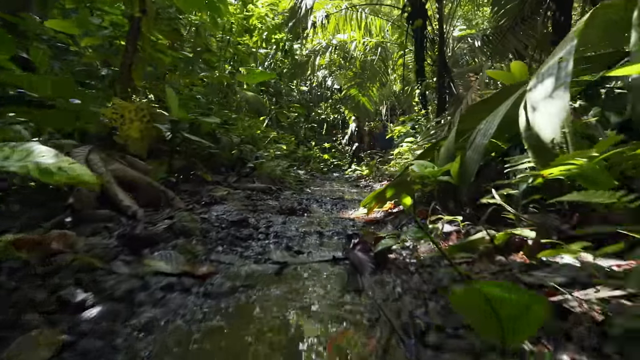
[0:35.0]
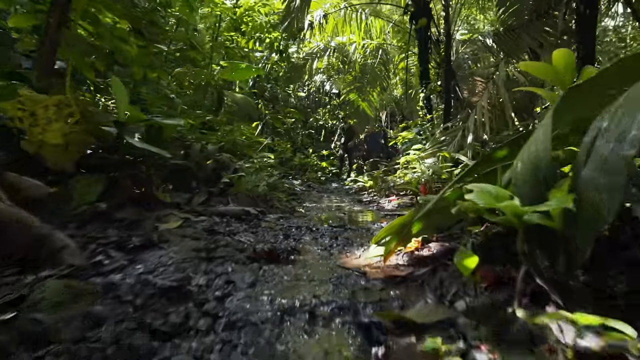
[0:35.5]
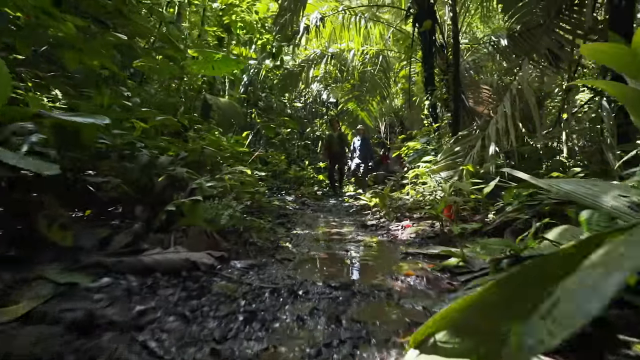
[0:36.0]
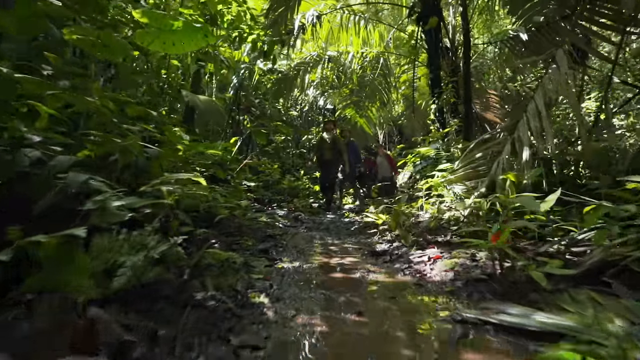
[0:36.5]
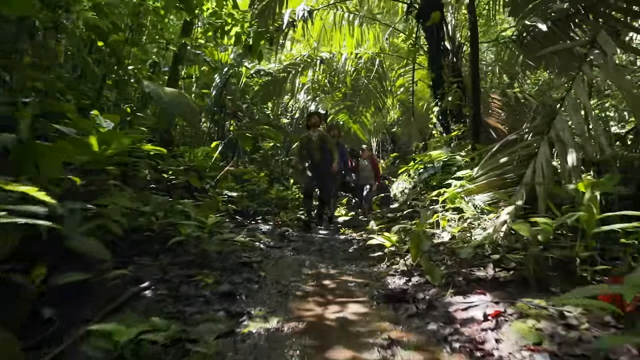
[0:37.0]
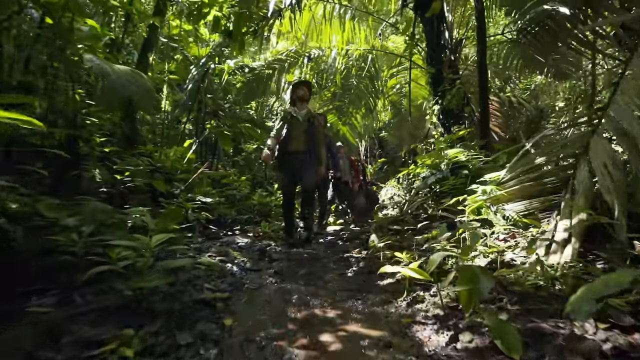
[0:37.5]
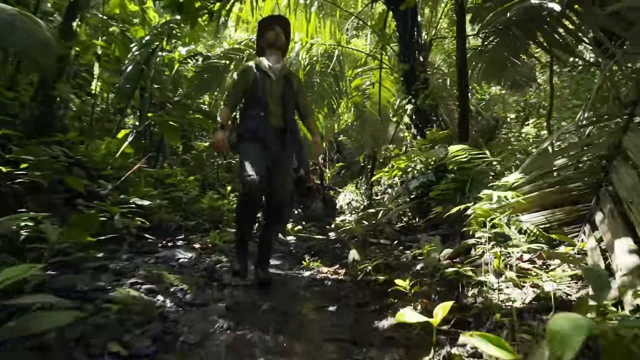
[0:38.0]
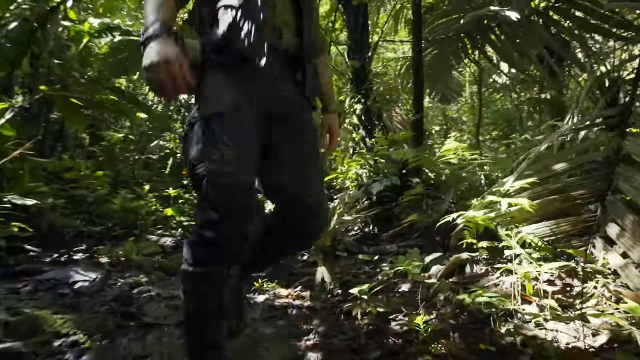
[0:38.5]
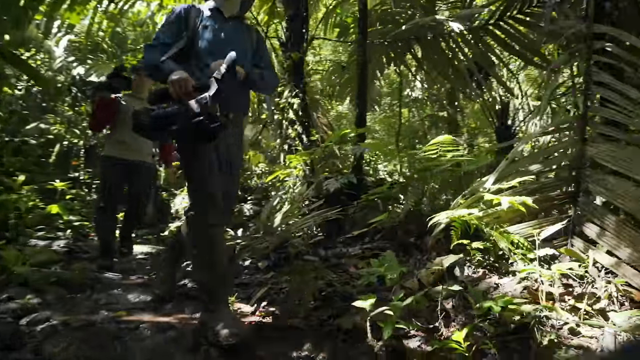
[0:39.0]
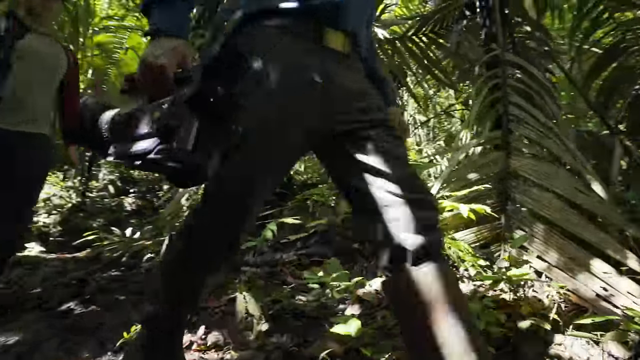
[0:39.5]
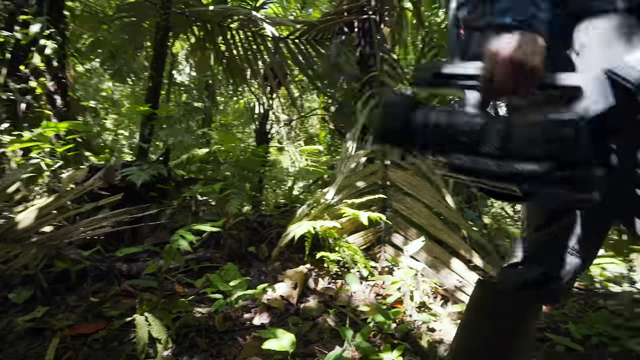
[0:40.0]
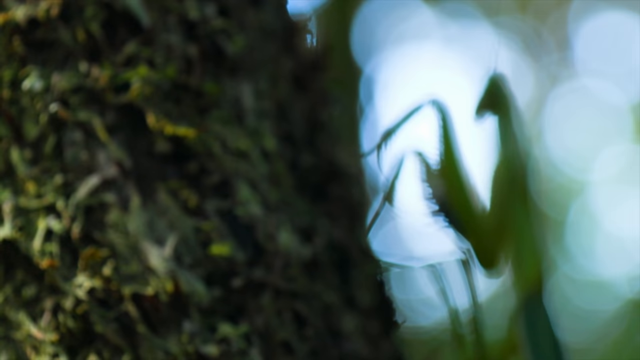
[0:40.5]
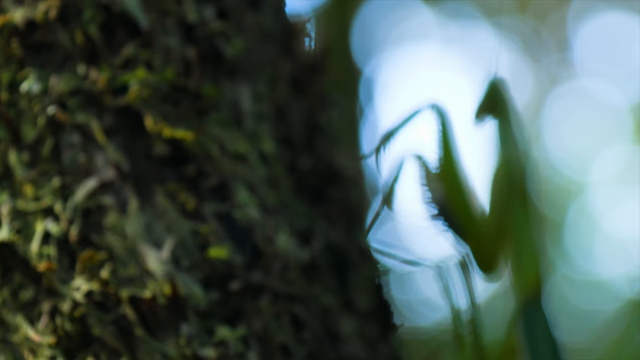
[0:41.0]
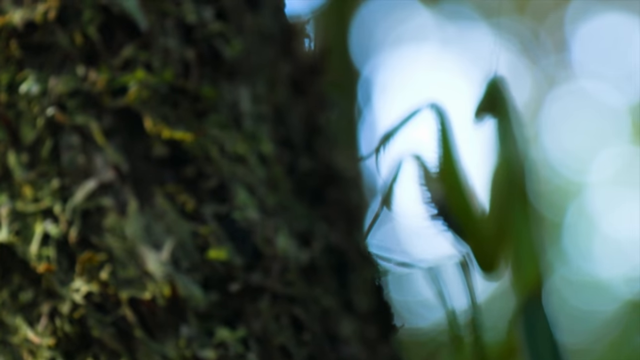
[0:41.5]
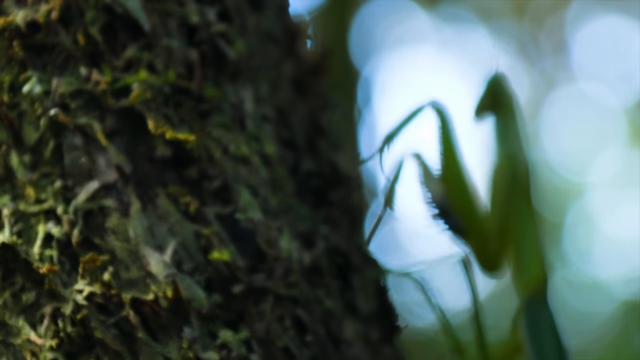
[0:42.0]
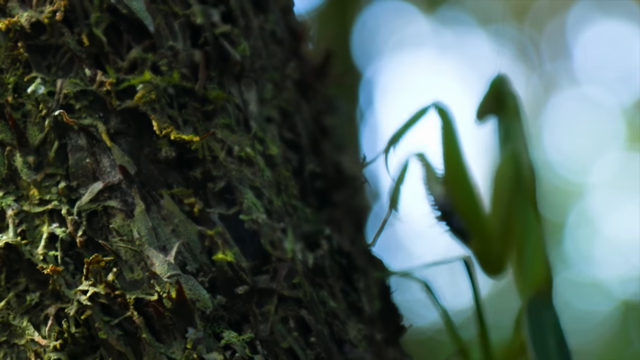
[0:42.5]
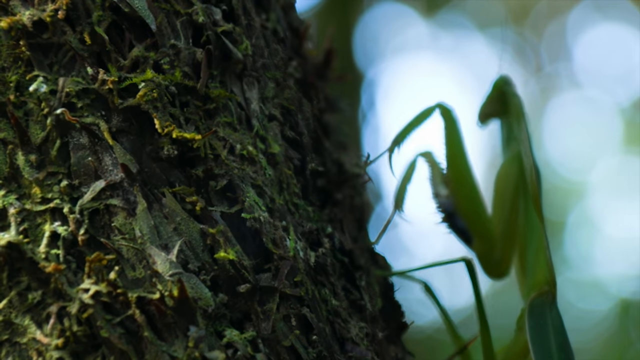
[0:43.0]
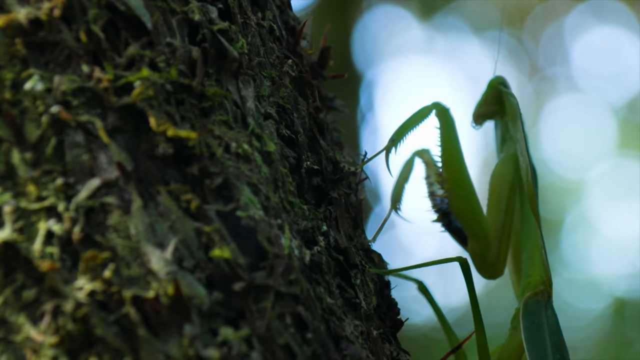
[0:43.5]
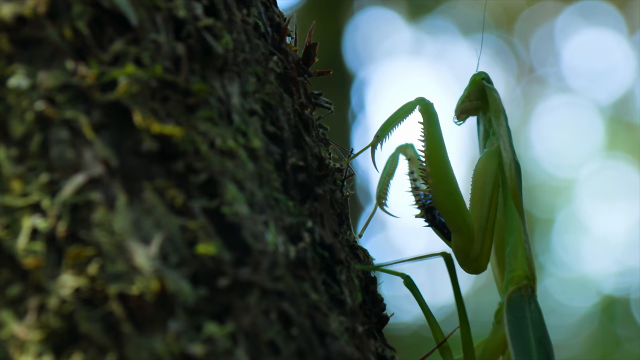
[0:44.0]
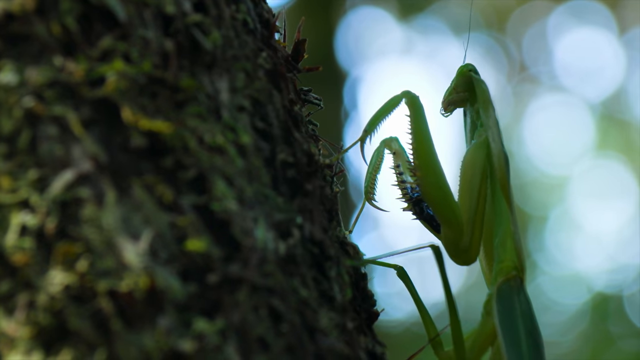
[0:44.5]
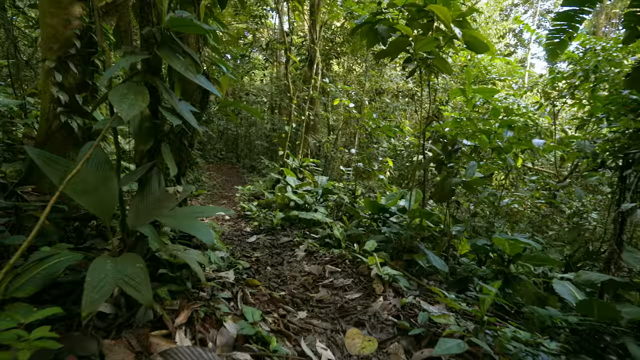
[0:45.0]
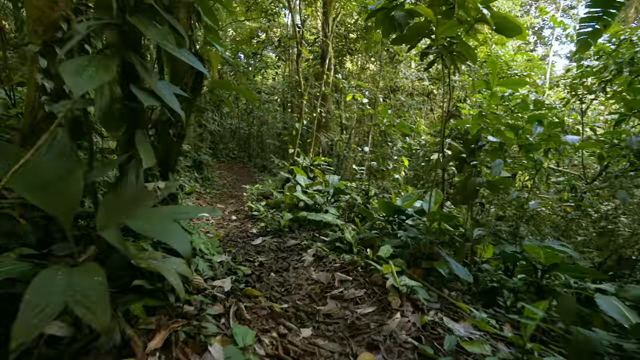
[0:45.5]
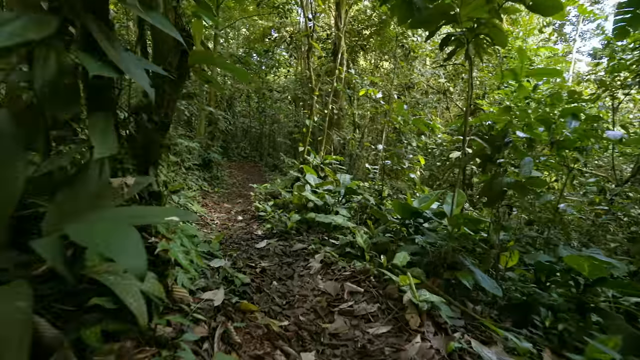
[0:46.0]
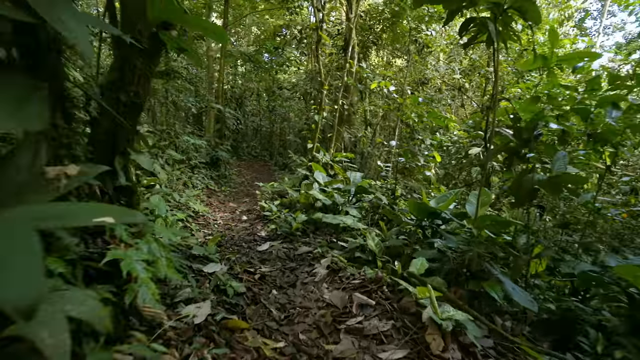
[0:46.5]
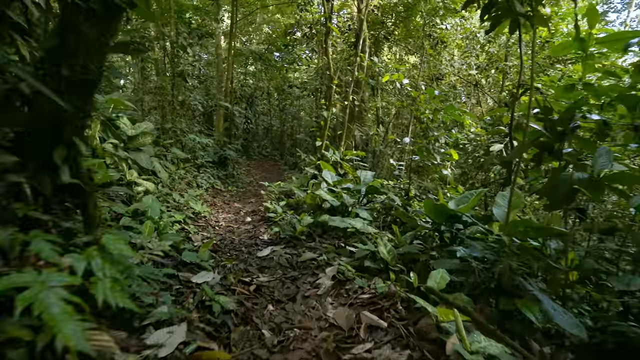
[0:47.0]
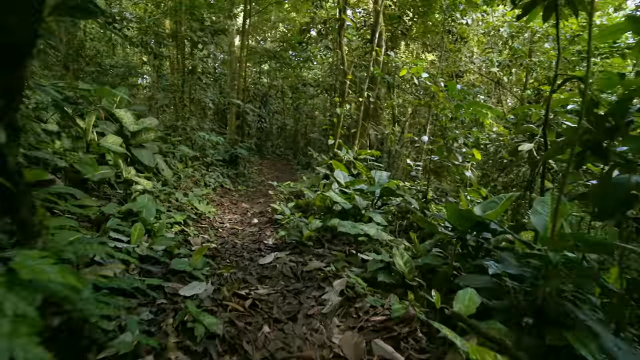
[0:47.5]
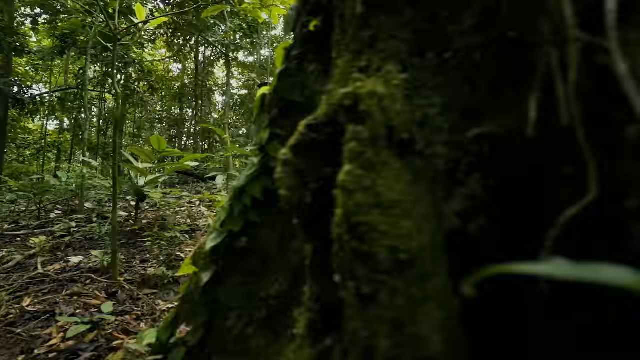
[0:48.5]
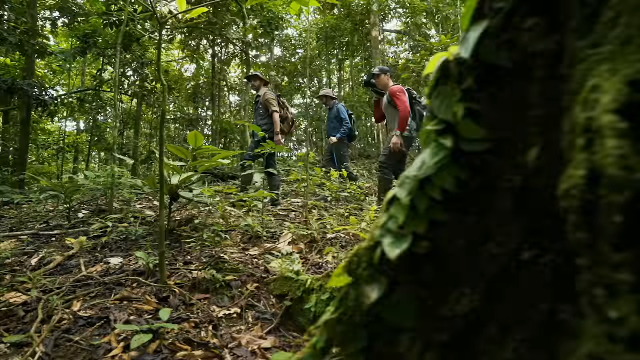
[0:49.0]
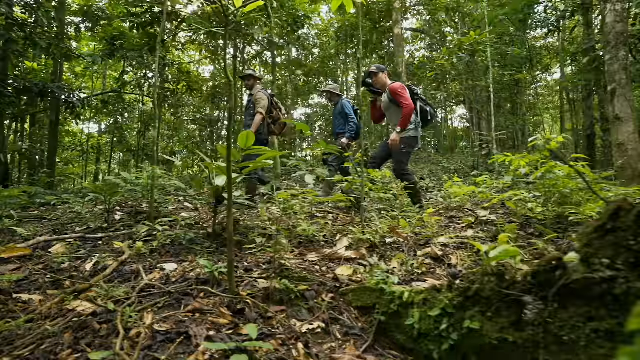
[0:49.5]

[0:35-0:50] People continue walking through what is maybe a forest or jungle. There are at least three people walking, and two of them are holding cameras, so they are maybe part of a documentary filming crew. The paths they walk through are very leafy, very green and very lush. The sky is clear, the sun is shining, and there are no signs of rain; the place seems to have warm weather, judging by the foliage and animals shown. Then a close-up shows a green insect holding on to a leaf.